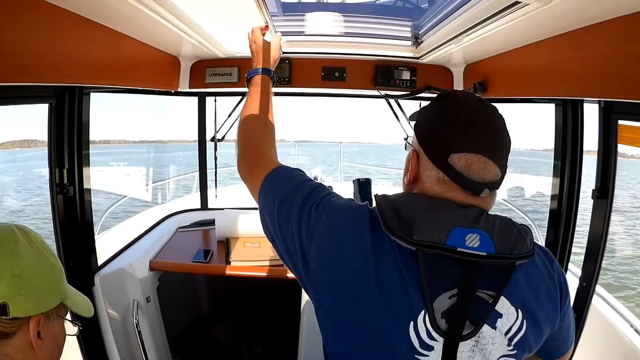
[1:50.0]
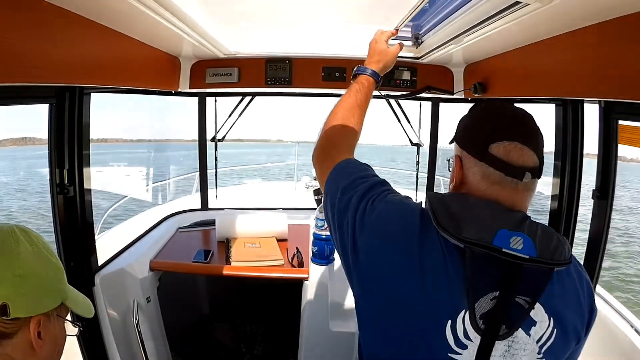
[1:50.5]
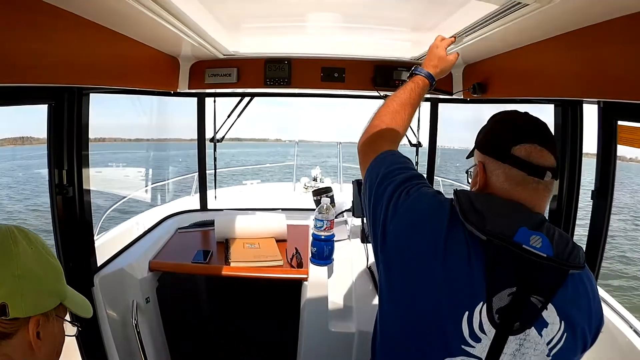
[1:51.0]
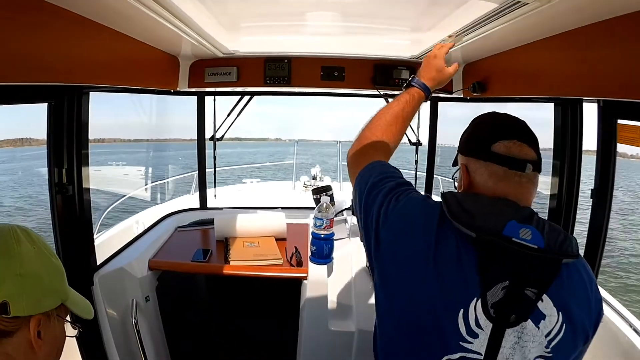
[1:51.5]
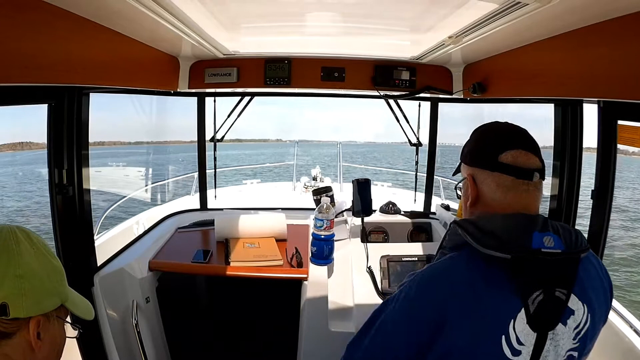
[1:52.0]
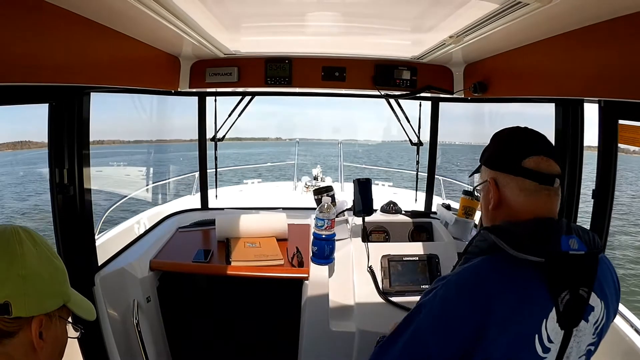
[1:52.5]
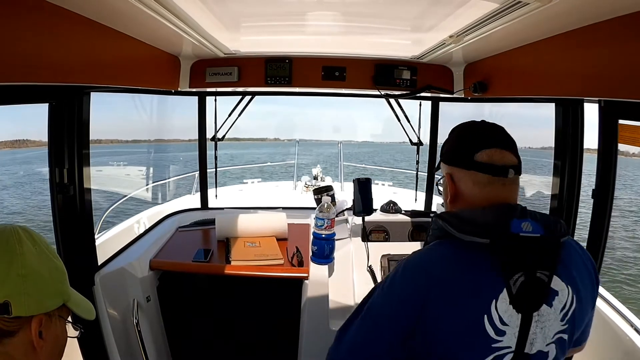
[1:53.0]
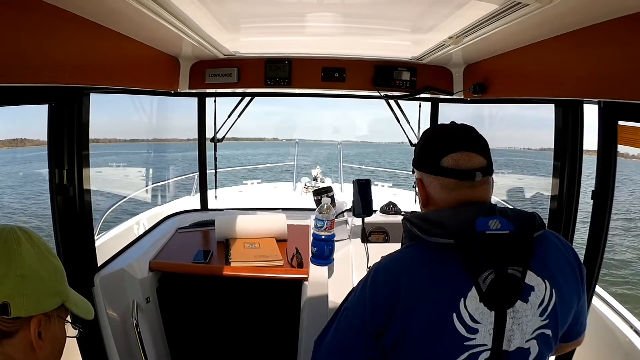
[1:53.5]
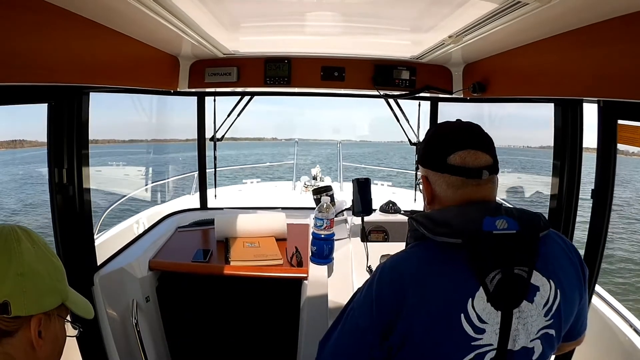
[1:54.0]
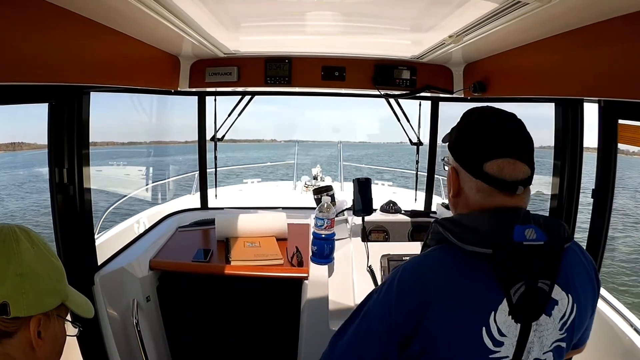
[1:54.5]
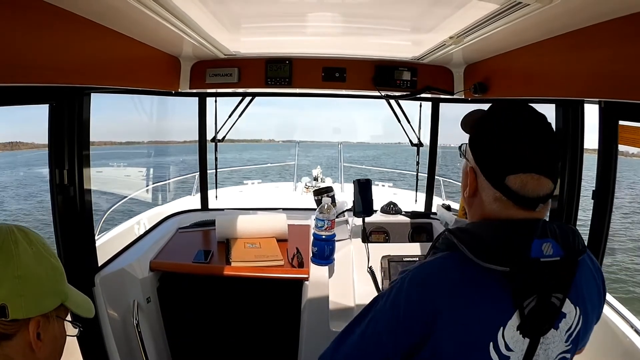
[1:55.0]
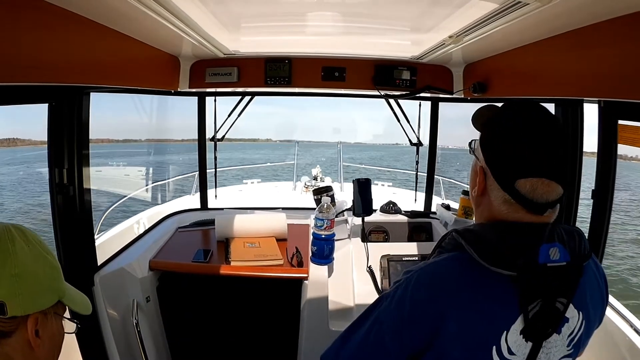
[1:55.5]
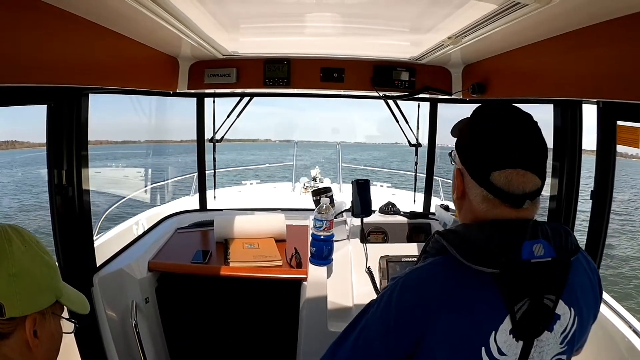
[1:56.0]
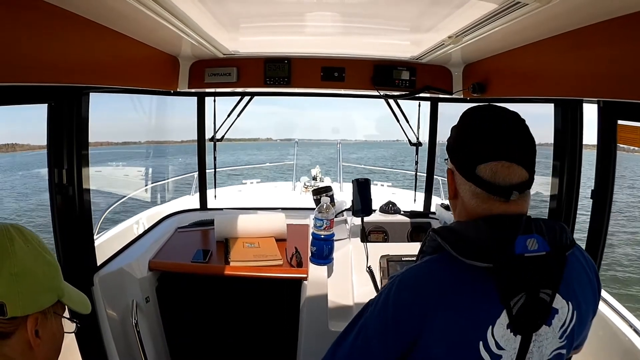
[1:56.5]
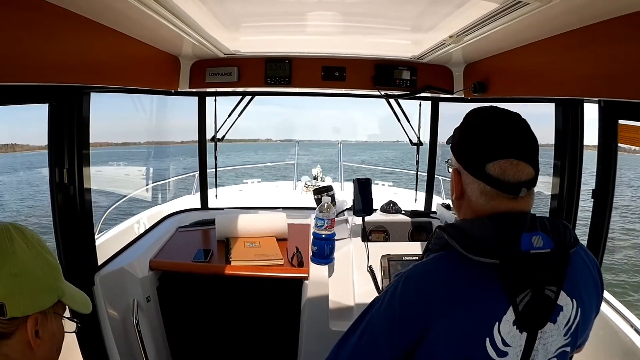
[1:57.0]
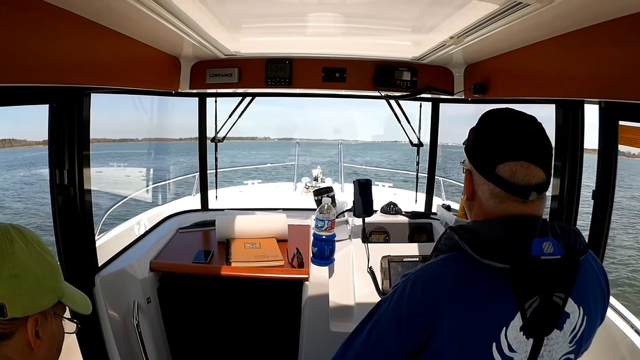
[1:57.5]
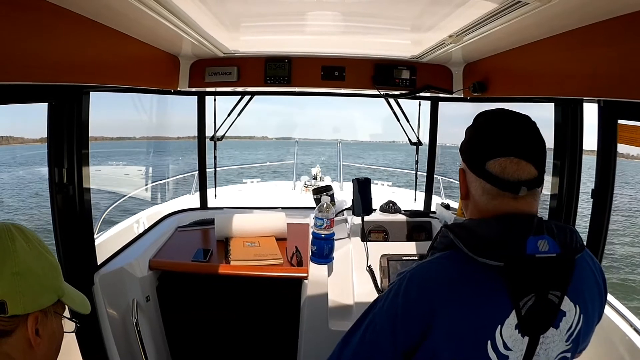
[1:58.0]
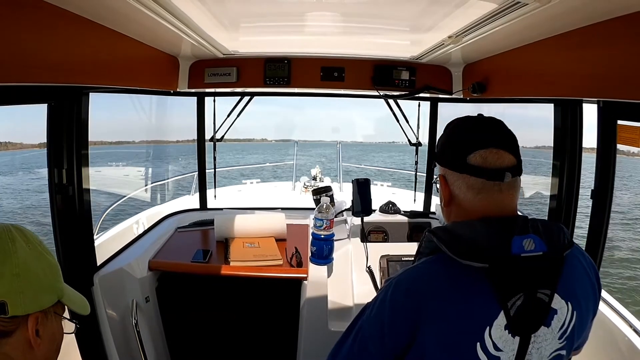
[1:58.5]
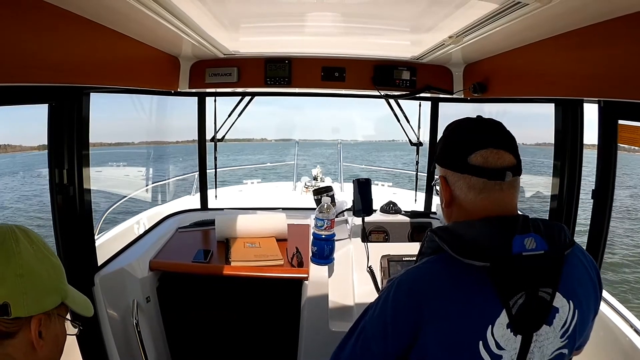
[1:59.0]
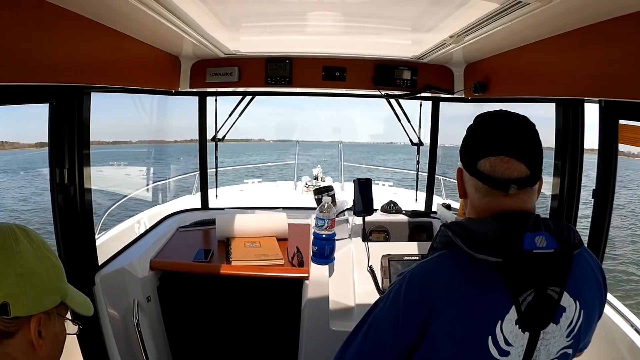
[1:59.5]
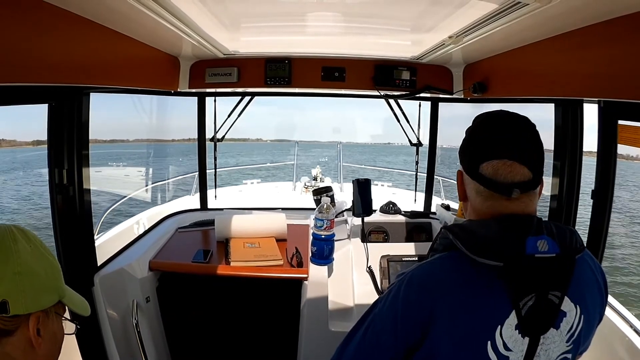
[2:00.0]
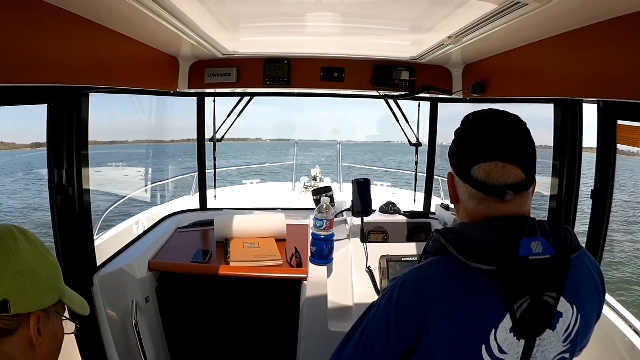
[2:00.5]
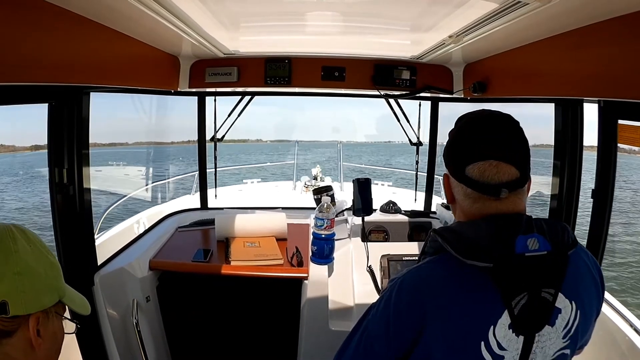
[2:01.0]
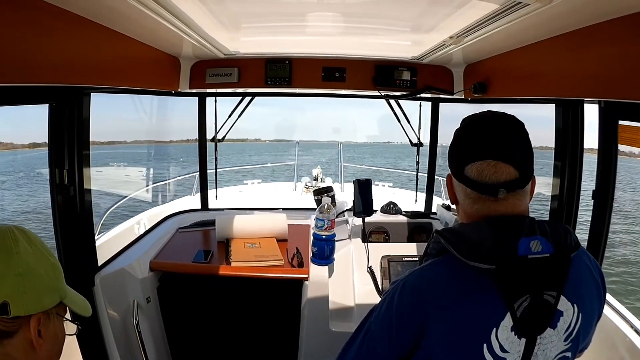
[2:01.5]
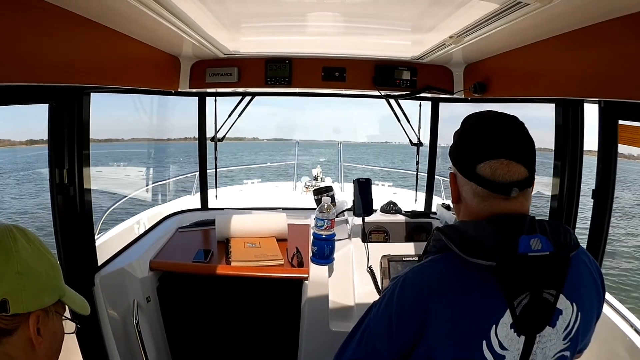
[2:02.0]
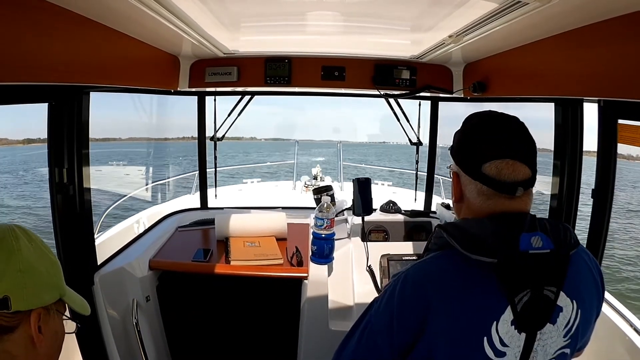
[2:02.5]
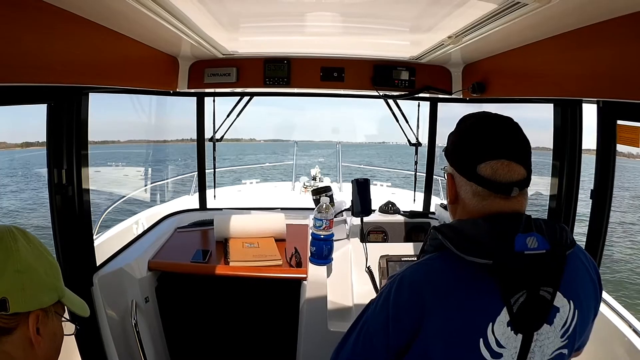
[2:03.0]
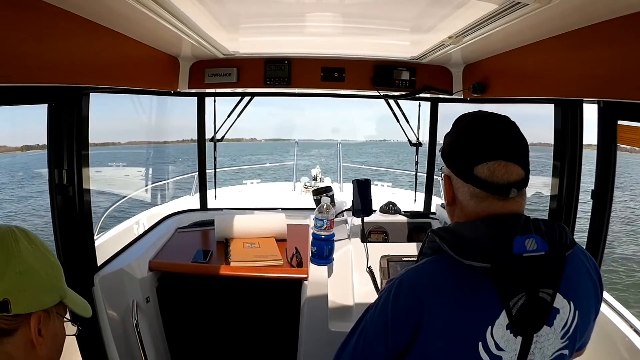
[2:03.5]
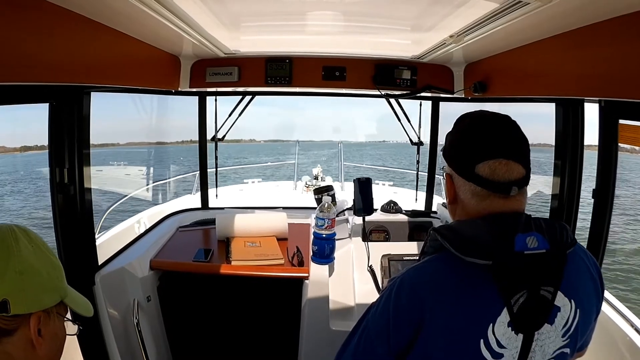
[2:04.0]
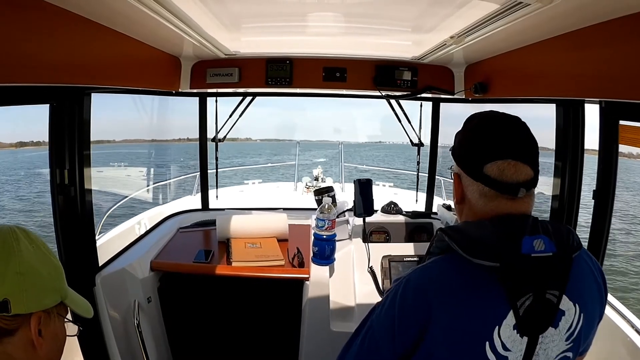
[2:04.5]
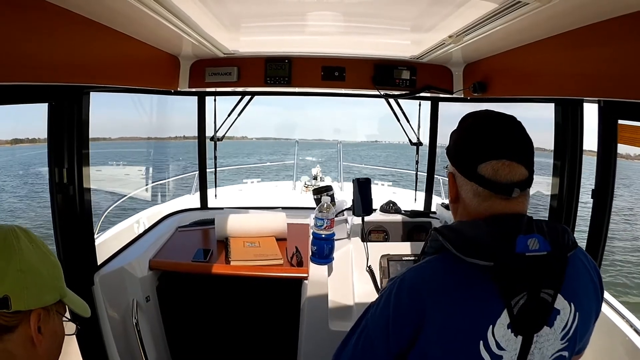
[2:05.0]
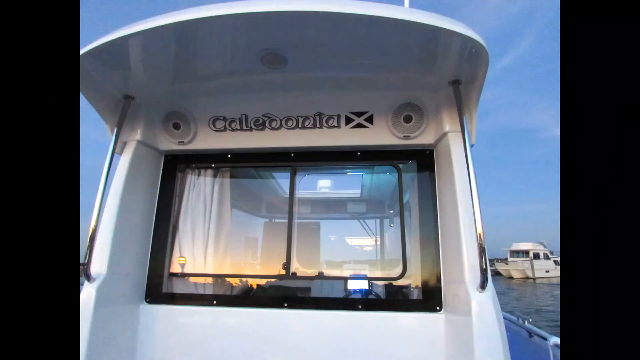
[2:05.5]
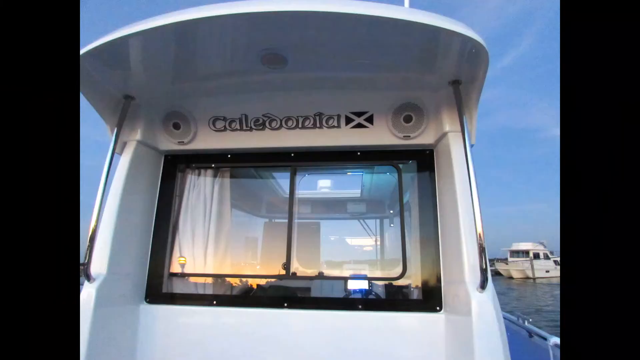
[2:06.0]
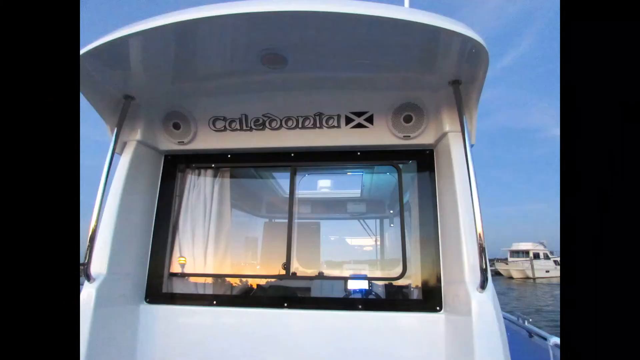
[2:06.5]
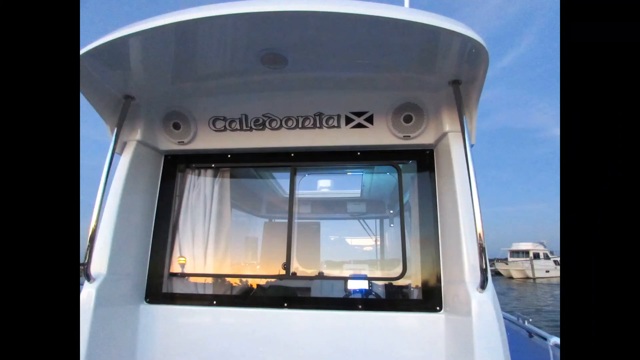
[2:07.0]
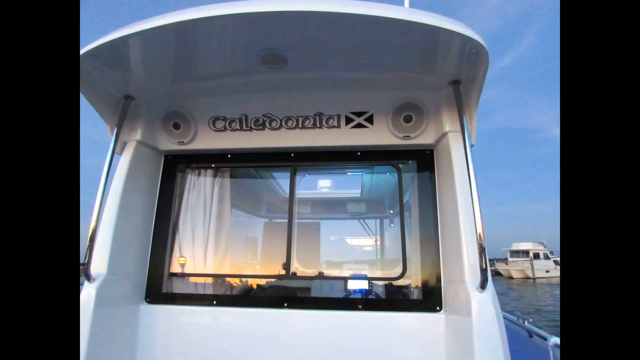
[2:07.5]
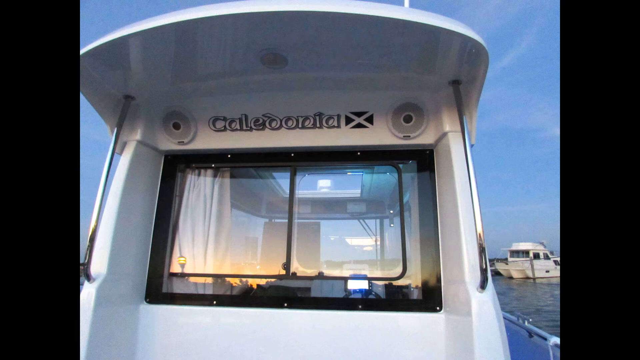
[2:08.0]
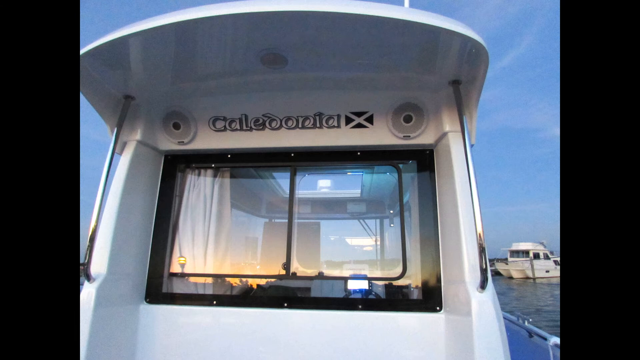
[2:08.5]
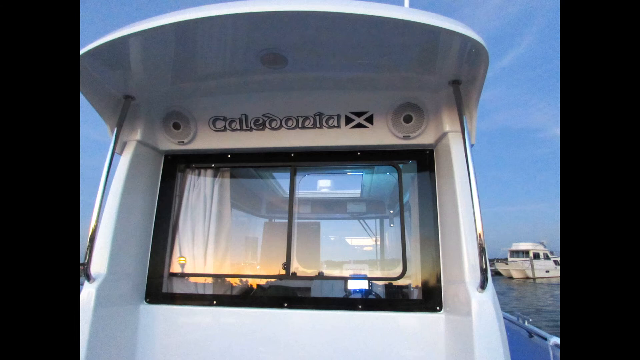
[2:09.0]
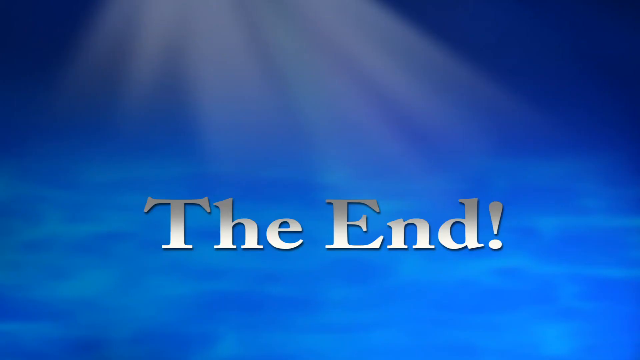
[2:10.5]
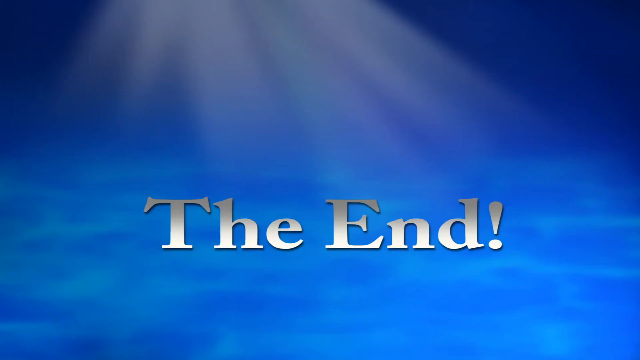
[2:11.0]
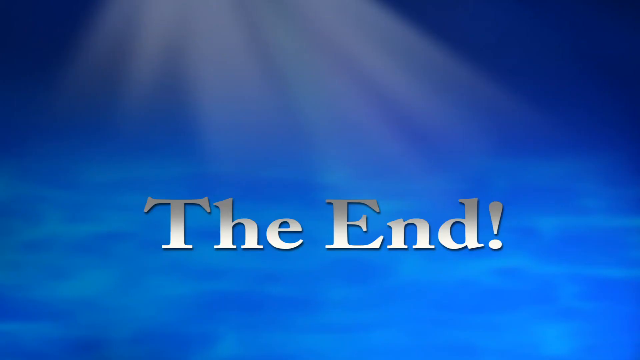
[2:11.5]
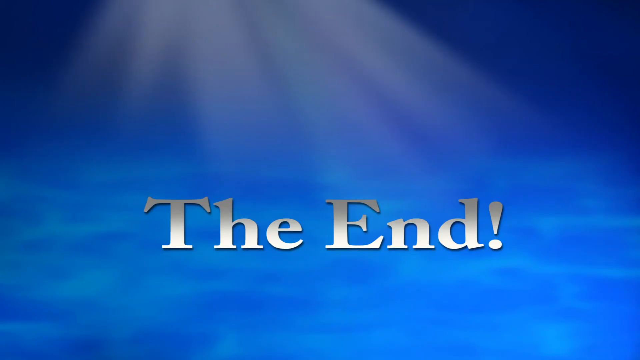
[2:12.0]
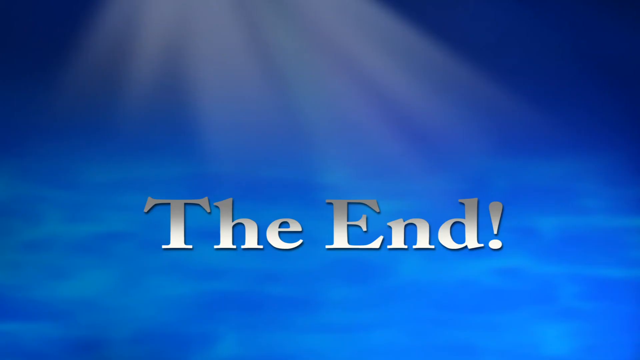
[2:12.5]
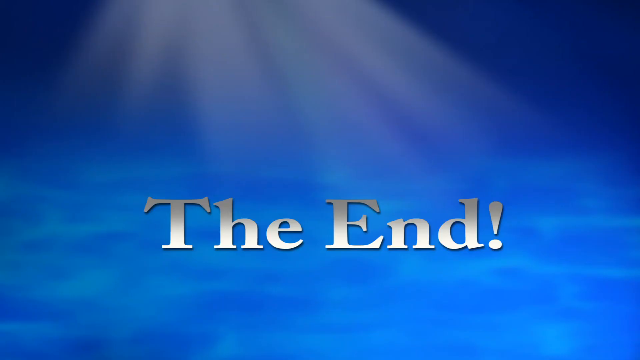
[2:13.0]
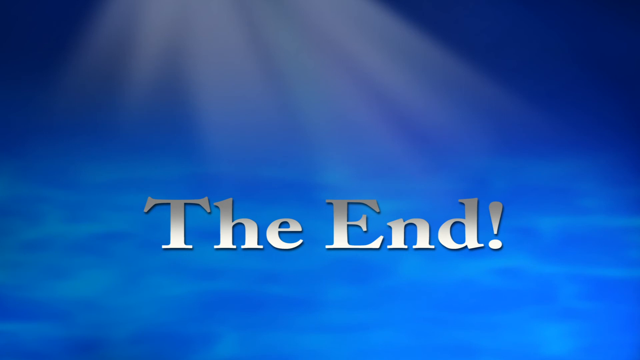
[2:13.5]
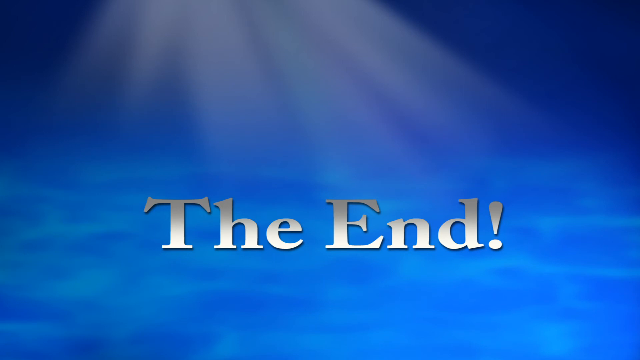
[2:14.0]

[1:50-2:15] Inside the boat is the man in the black hat, who also appears to be wearing glasses. He faces away from the camera and is opening something above him on the boat. He wears a short-sleeved blue shirt and a black vest of some sort. In front of him inside the boat is a bottle of water in a container, along with multiple black items that look like parts of the boat. A brown table holds a book with an orange cover; there appears to be a phone to the left of the book, sunglasses to the right, and a roll of paper towels in front of it. The boat moves forward, and the lake or ocean moves past as they continue on. The last part shows the name of the boat, "Caledonia".